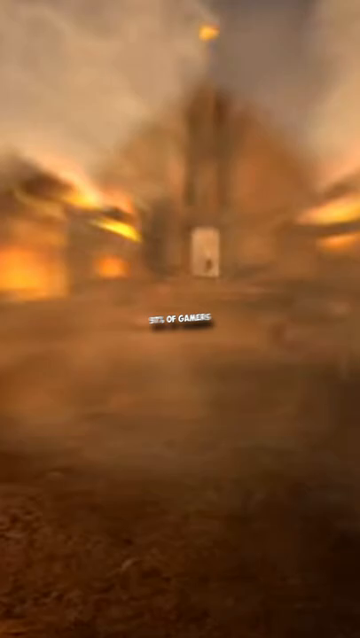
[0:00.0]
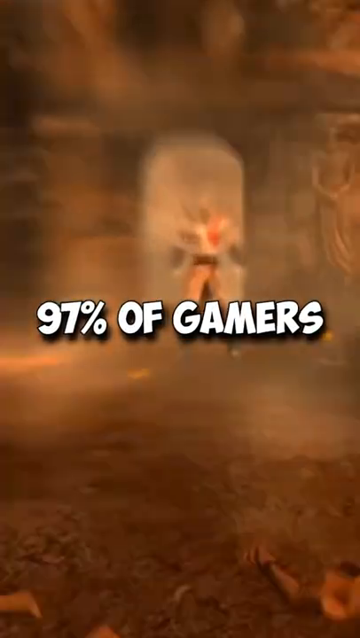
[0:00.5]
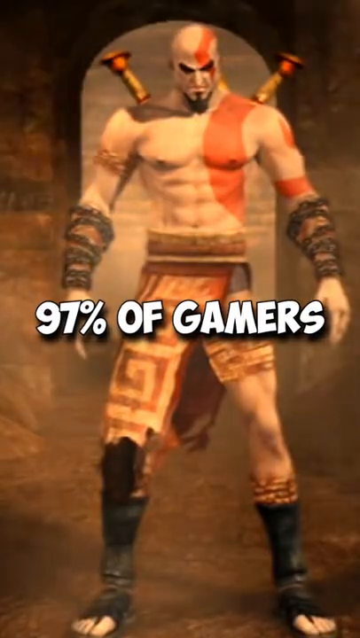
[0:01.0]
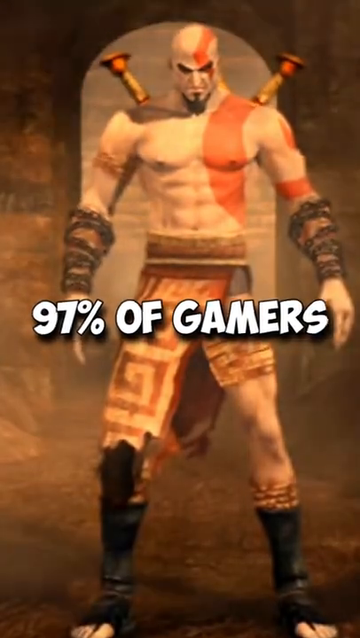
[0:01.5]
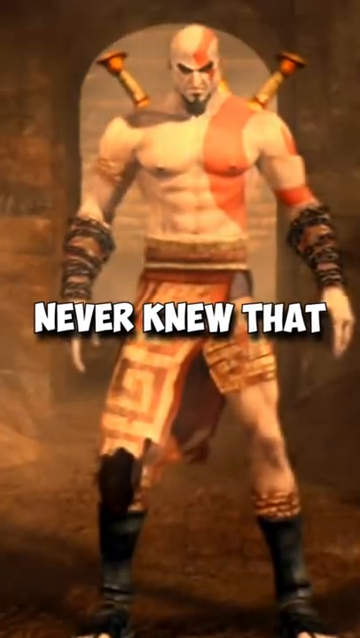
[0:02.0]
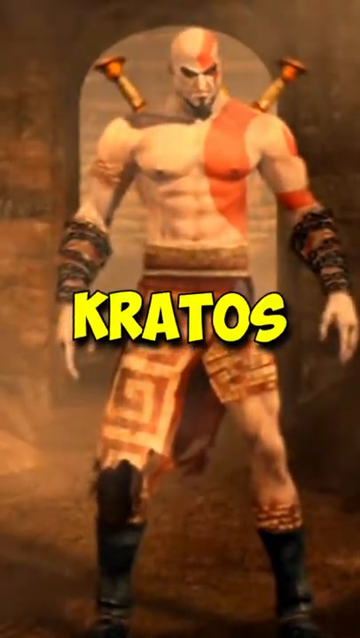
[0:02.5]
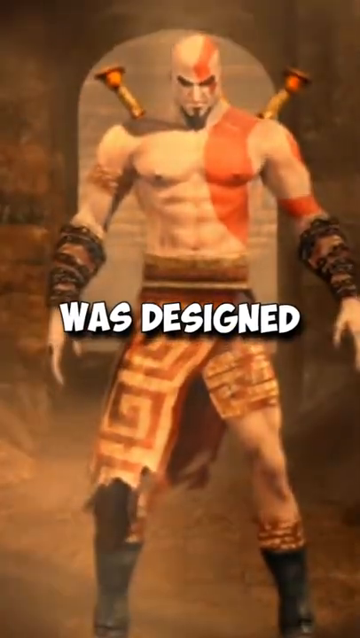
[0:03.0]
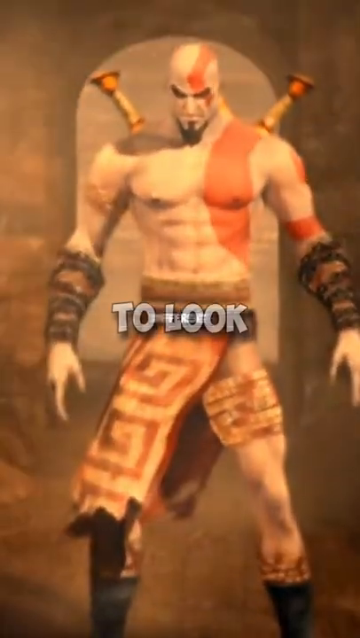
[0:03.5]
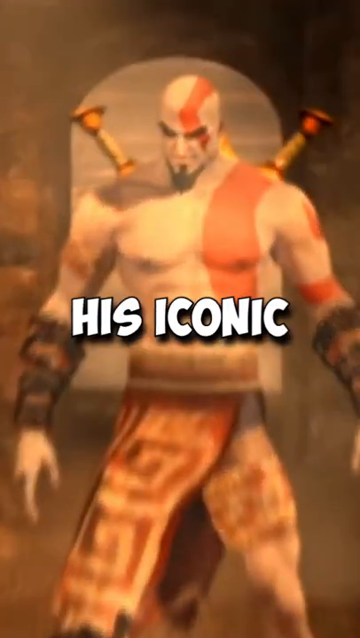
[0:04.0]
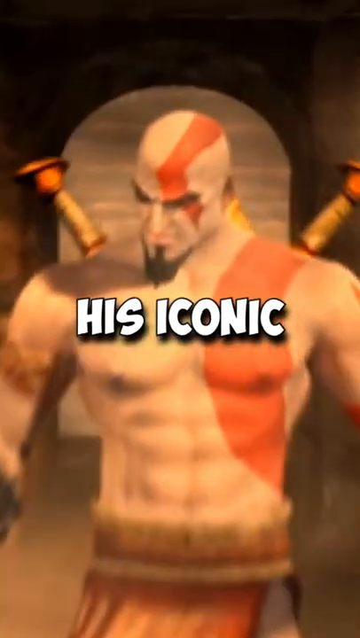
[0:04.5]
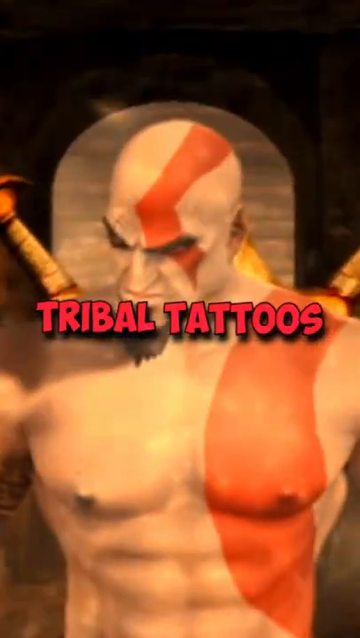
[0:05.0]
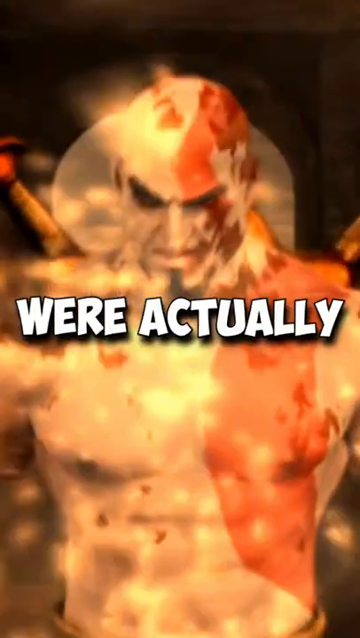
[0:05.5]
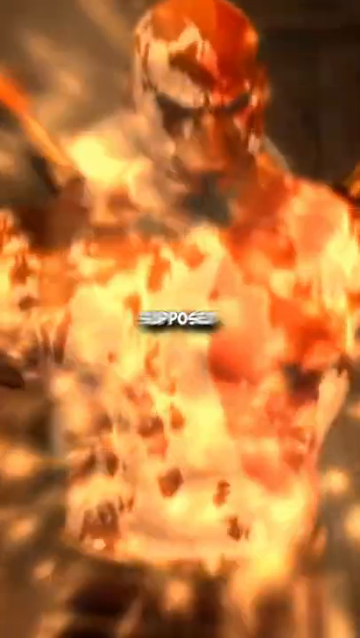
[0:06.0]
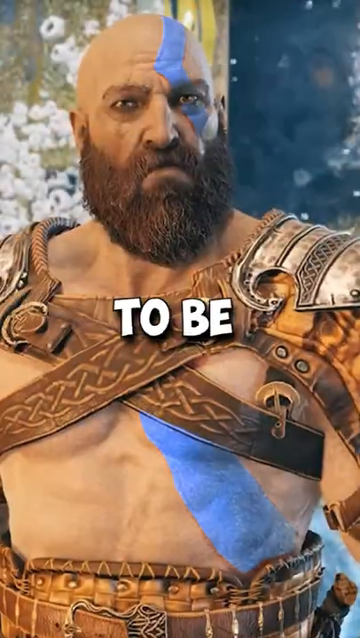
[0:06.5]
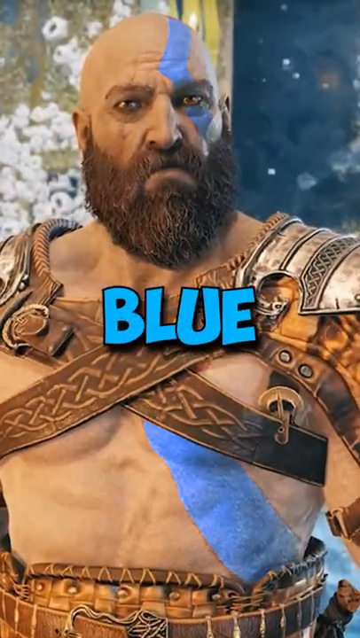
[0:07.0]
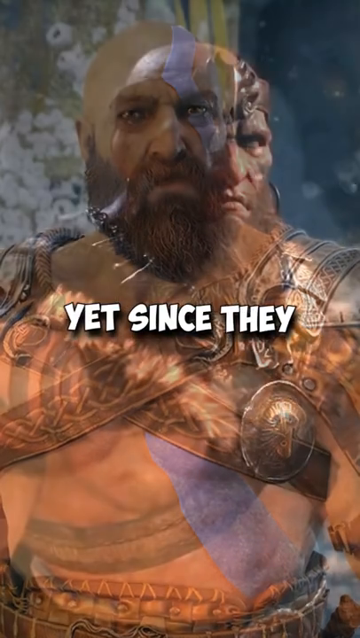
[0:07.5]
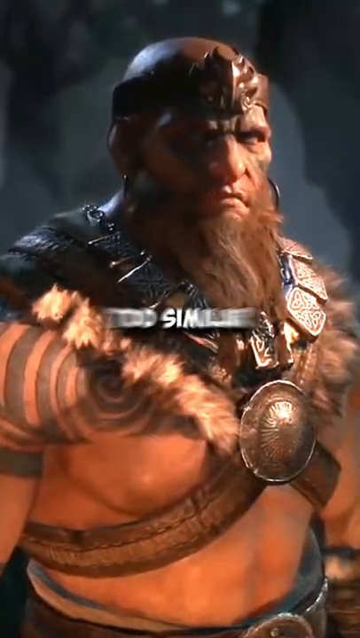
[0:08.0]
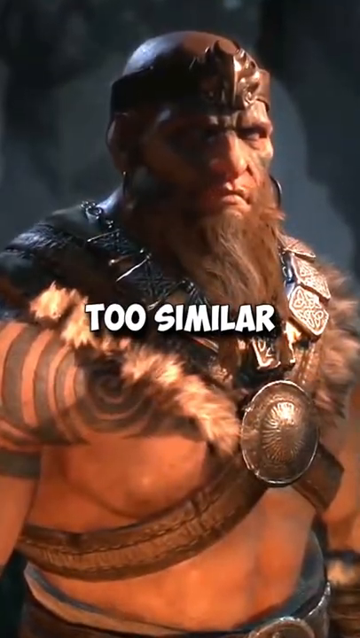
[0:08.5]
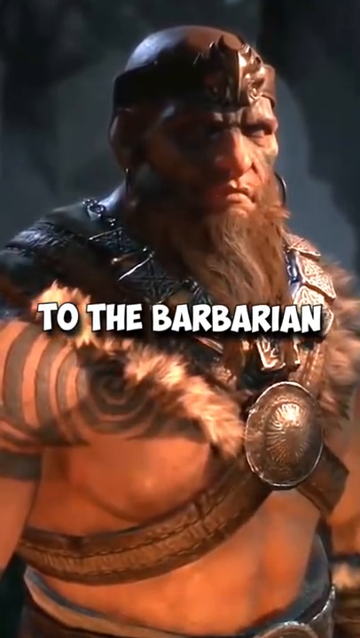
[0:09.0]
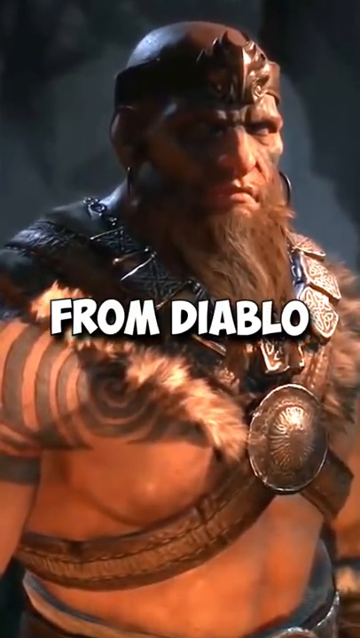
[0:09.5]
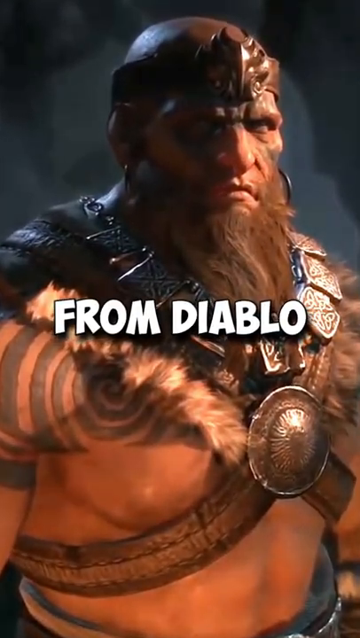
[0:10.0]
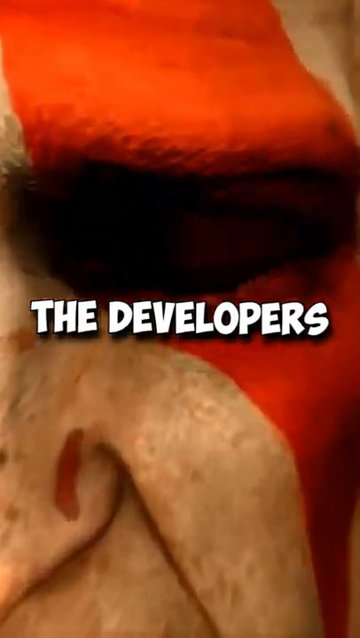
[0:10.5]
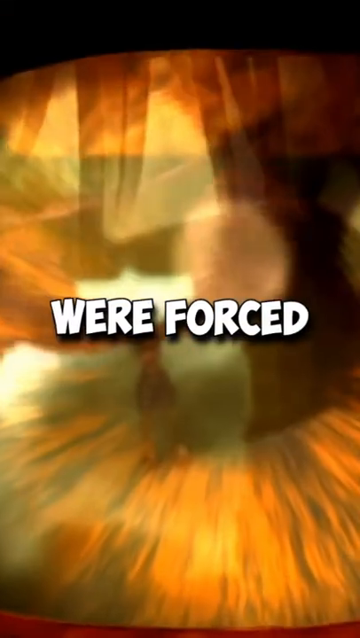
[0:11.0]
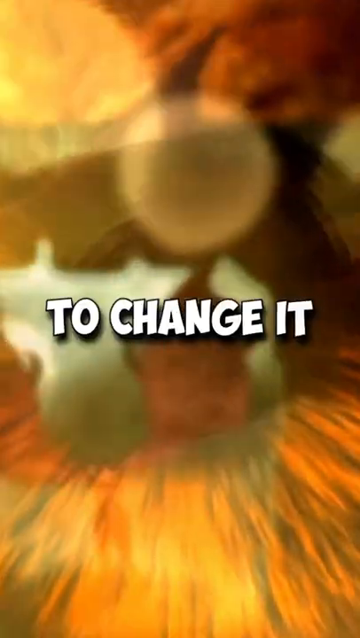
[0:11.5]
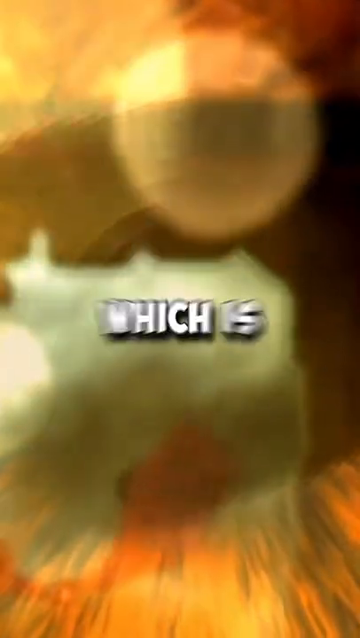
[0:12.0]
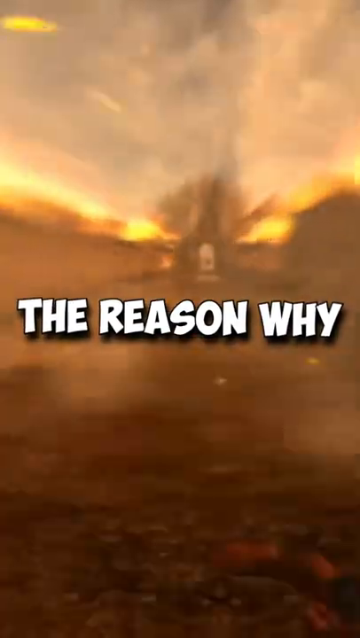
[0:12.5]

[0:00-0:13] In-game footage shows Kratos, the main character from God of War, intercut mostly with images of the barbarian from another game, Diablo. The video describes how Kratos has a red body paint, sort of tribal tattoo look, but that it was originally supposed to be blue; the developers decided that looked too much like the Diablo barbarian, so Kratos' tattoos were changed to red. Words on the screen also claim that 97% of gamers never knew Kratos was designed to look different. Kratos is a big, muscular, bald man with a really distinctive red tribal tattoo and two swords strapped to his back. The barbarian is bald but has a beard, and is sort of stockier and kind of heavier looking.